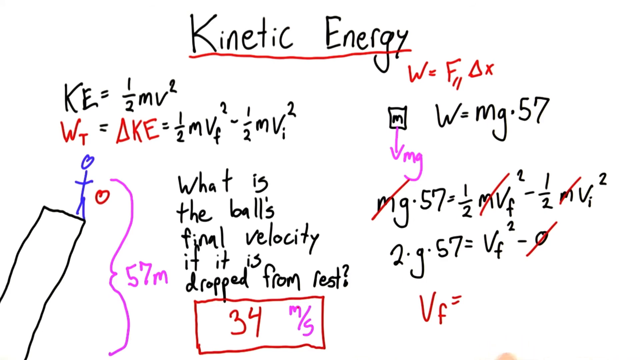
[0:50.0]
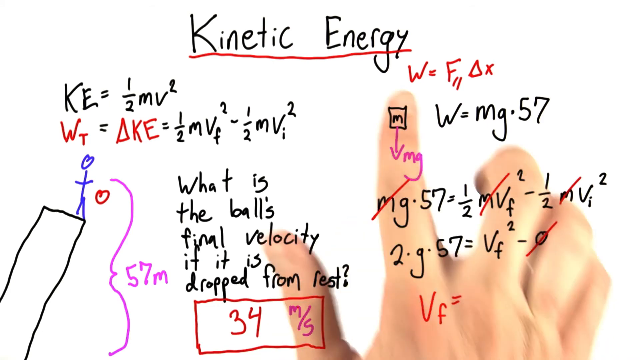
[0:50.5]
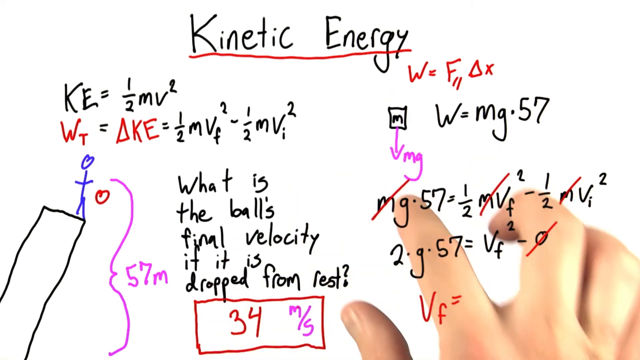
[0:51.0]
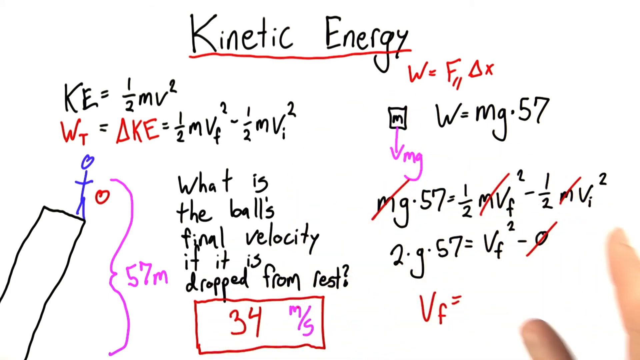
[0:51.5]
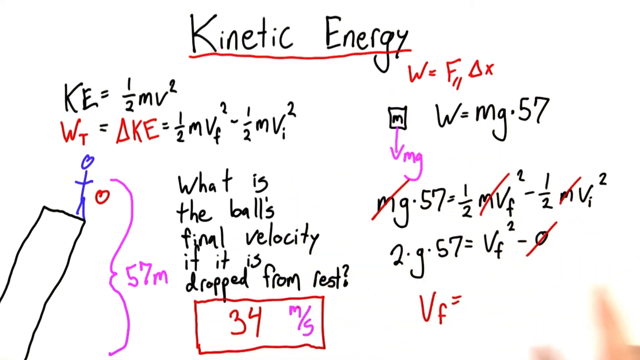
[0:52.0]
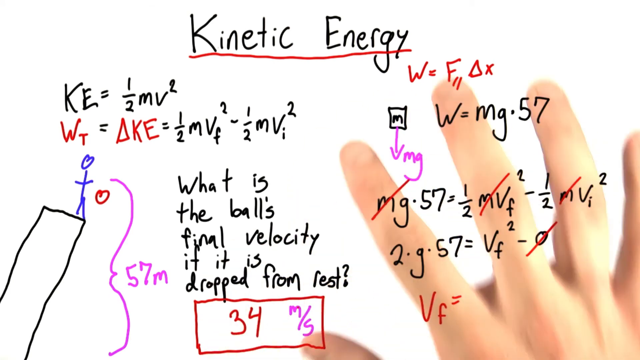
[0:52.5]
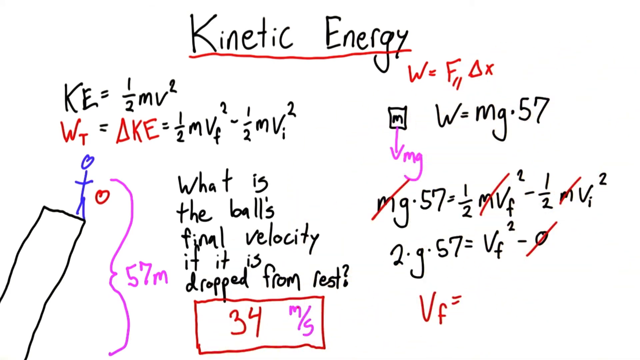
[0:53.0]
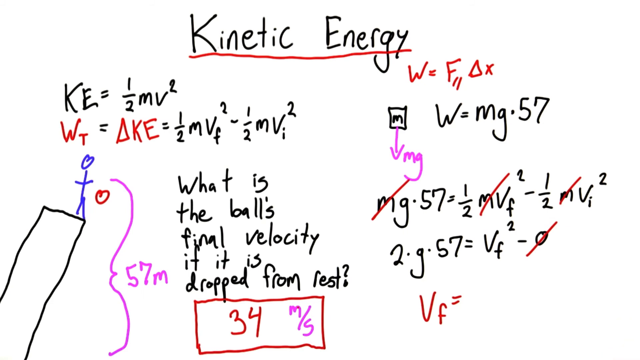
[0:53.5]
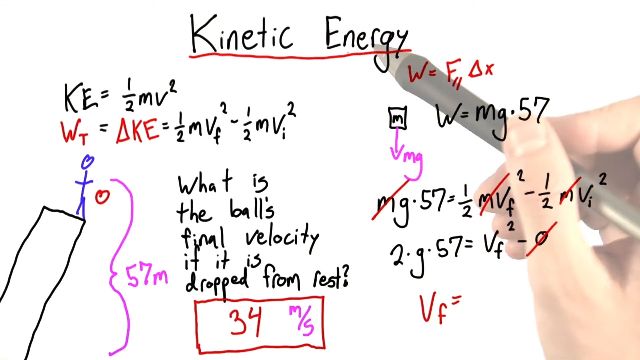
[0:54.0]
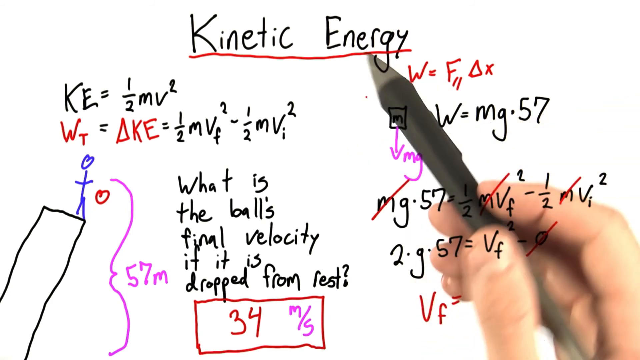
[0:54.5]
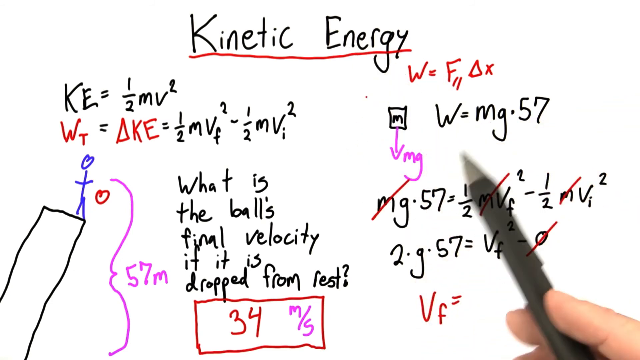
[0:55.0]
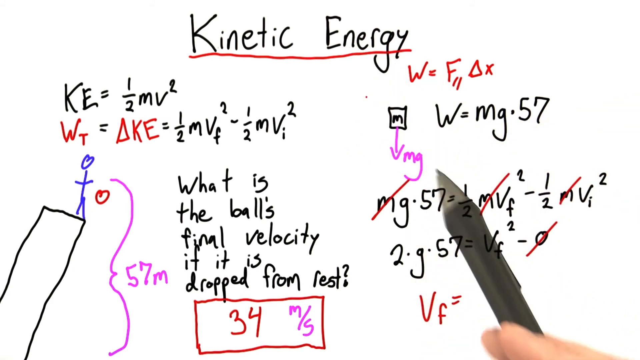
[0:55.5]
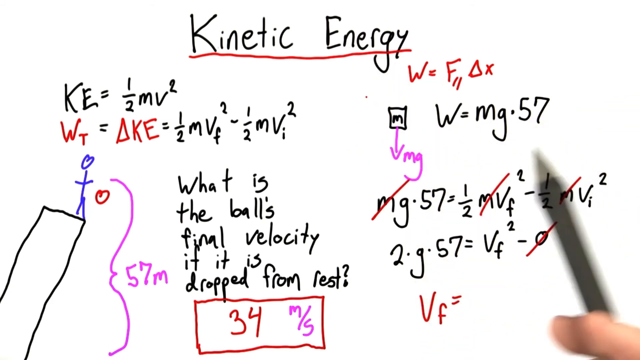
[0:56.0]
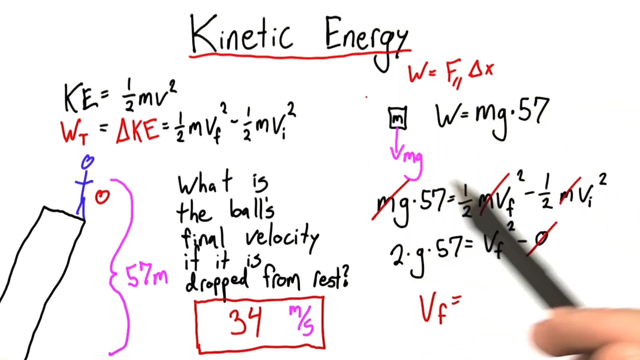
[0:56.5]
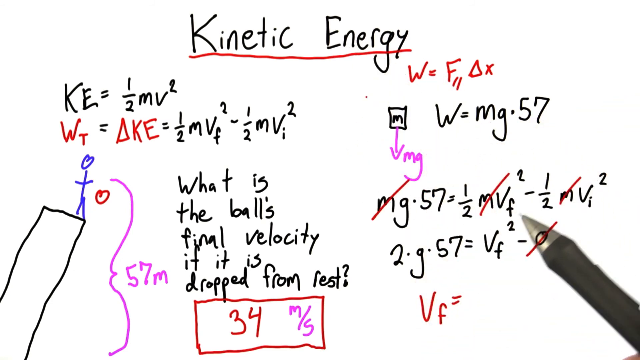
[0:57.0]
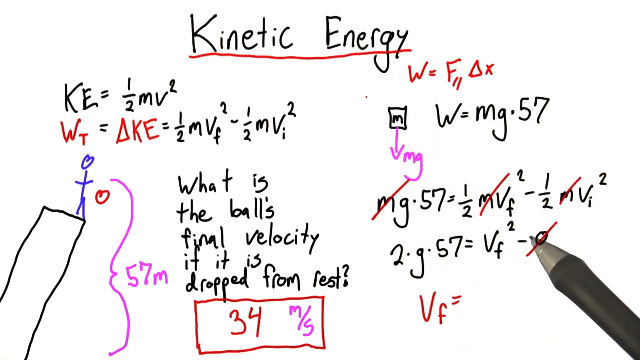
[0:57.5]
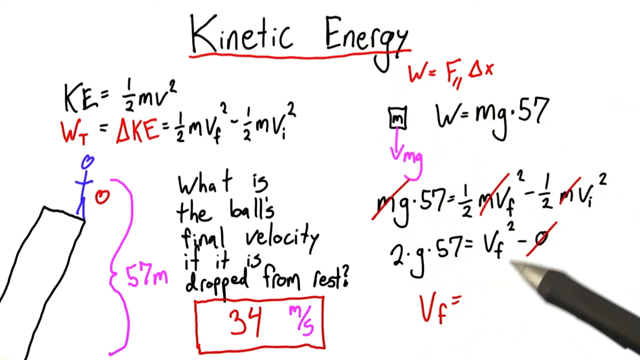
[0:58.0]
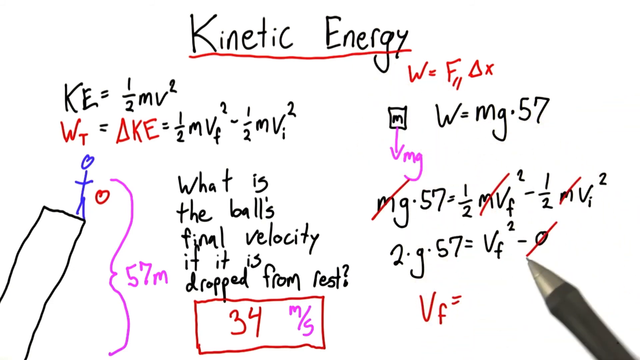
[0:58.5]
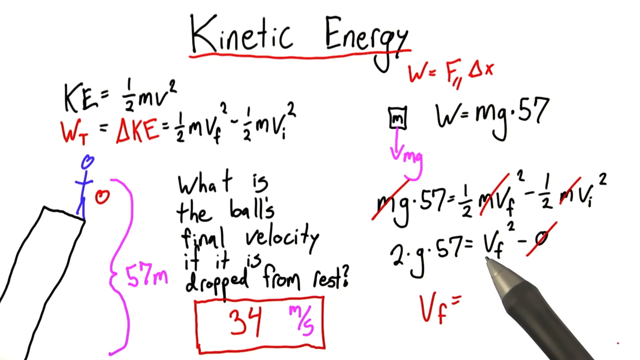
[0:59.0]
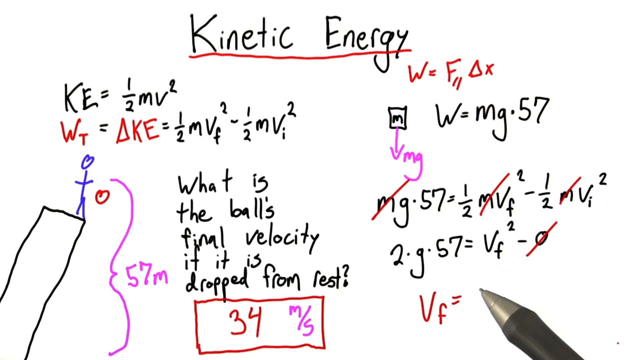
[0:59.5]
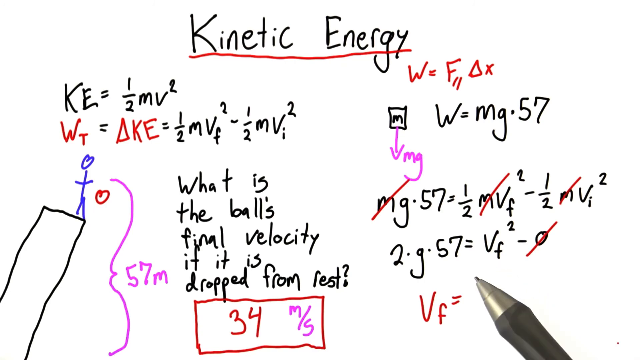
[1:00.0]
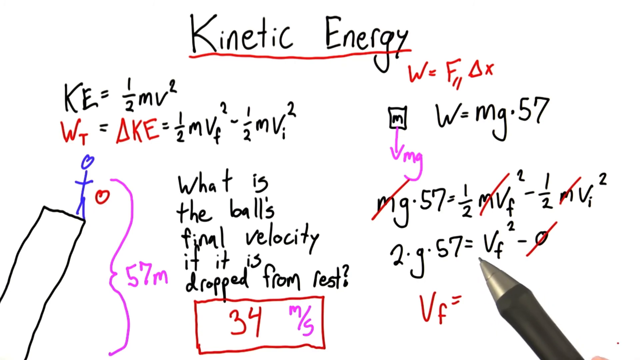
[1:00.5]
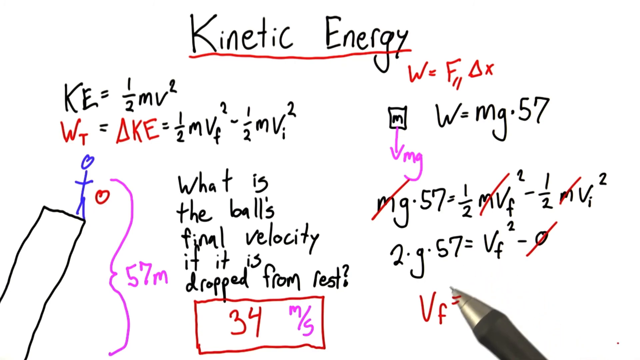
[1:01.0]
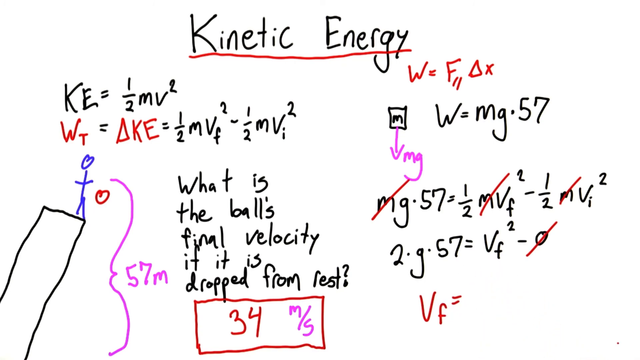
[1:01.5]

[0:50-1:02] The hand has dropped the pen and occasionally pops up from the bottom of the screen to point at some of the content, always staying below all the text on the screen. It then grabs the pen again and gestures with it without writing, mostly pointing toward the final equations in the lower right. The content has progressed from the upper left into a second column toward the lower right; the upper left is more or less the problem and the upper right more or less the solution. No final value for Vf is shown. By the end almost the whole screen is full, with a little space in the upper left and upper right, to the left and right of "kinetic energy". In the lower right, in red, is "Vf =", never finished.